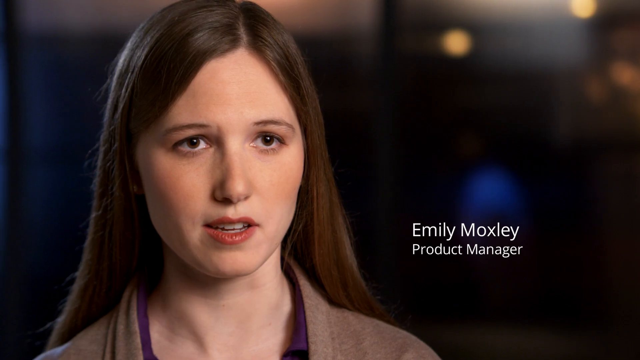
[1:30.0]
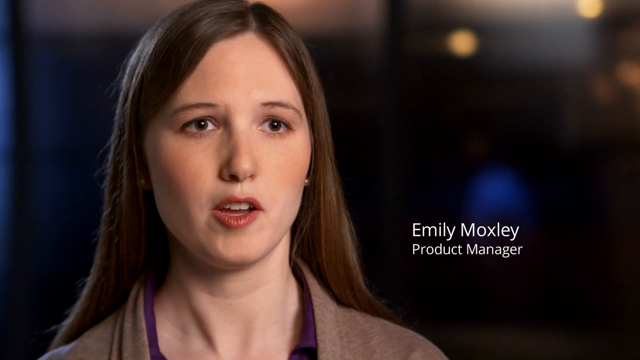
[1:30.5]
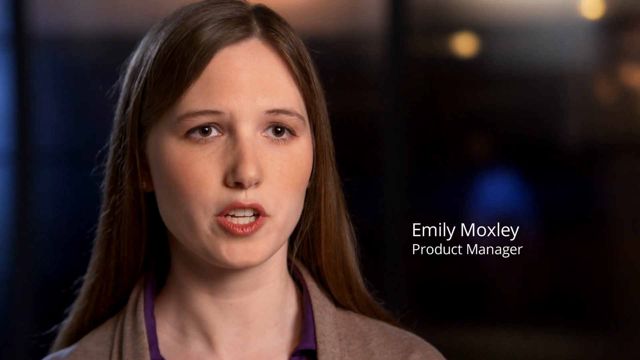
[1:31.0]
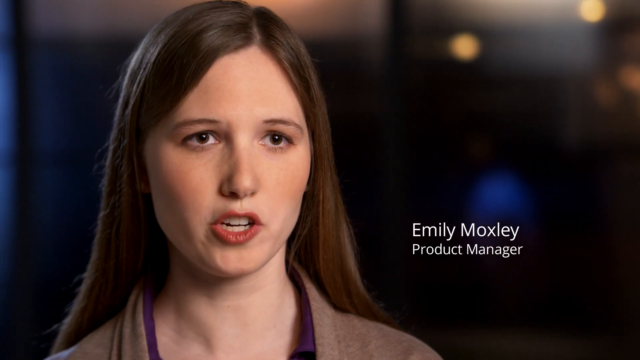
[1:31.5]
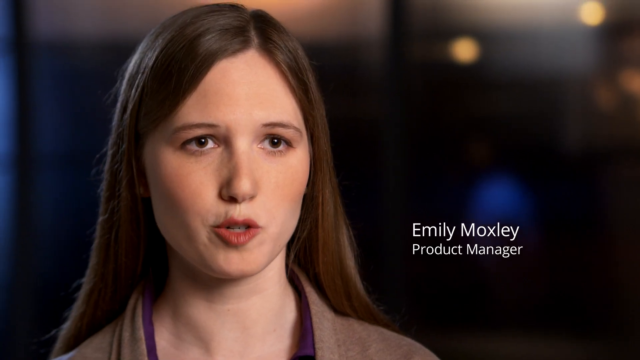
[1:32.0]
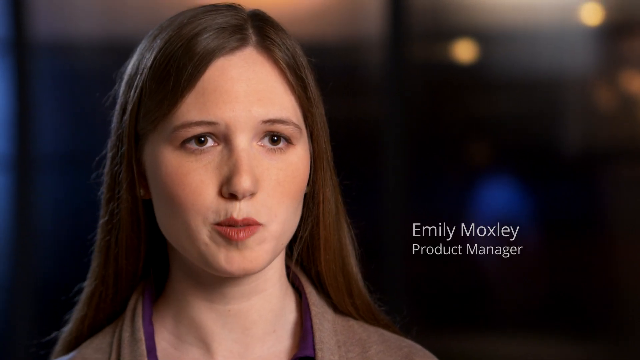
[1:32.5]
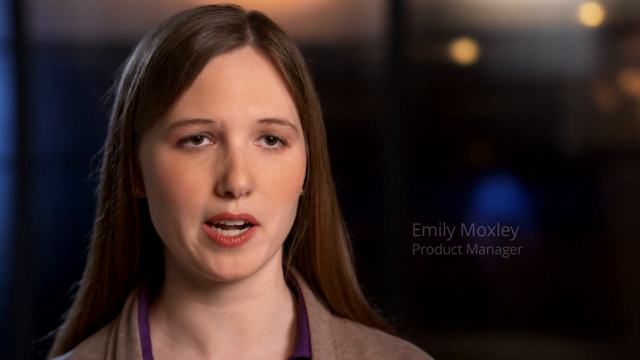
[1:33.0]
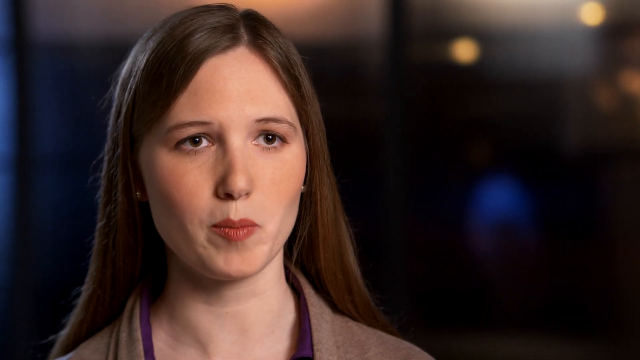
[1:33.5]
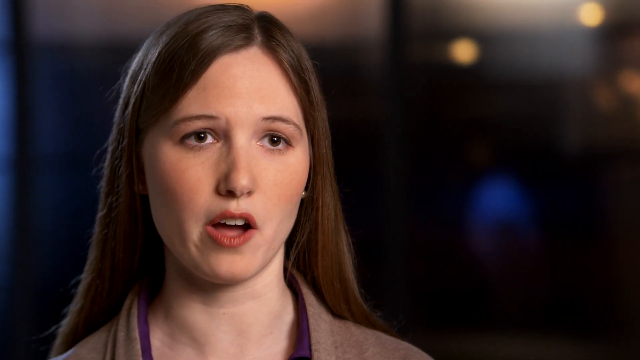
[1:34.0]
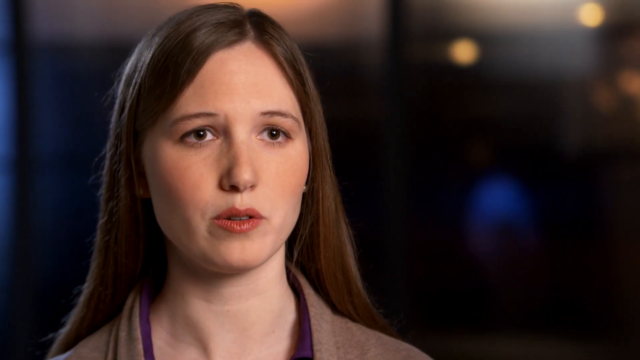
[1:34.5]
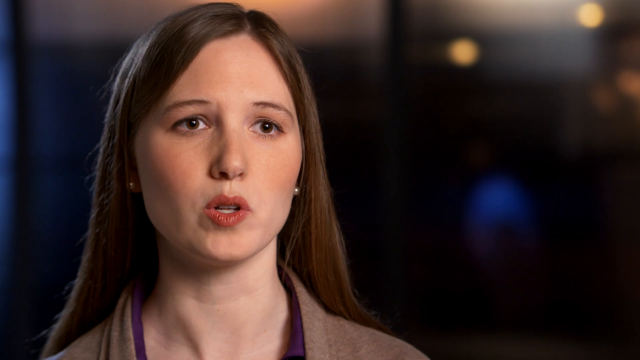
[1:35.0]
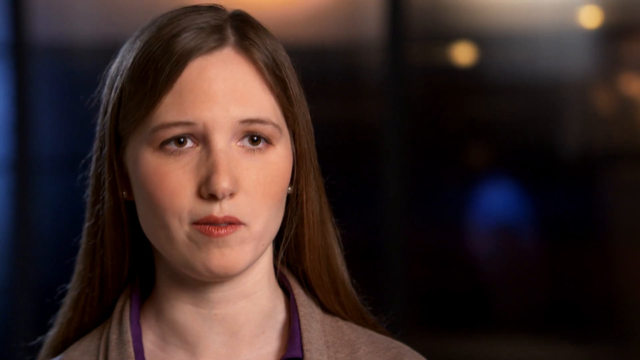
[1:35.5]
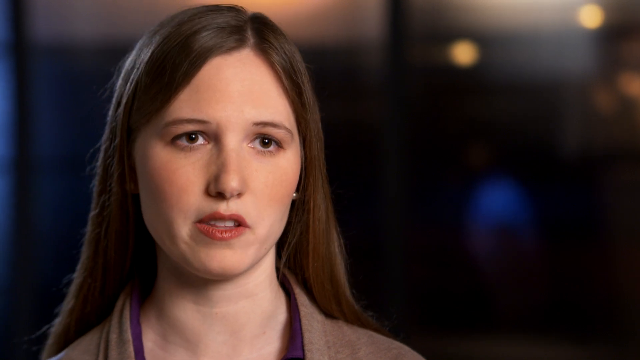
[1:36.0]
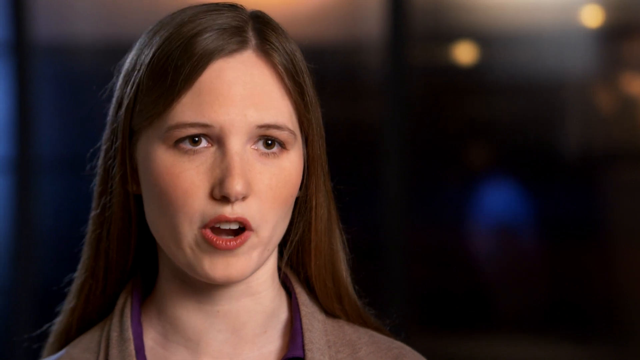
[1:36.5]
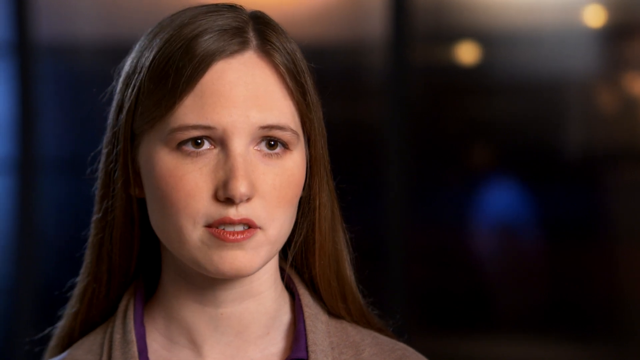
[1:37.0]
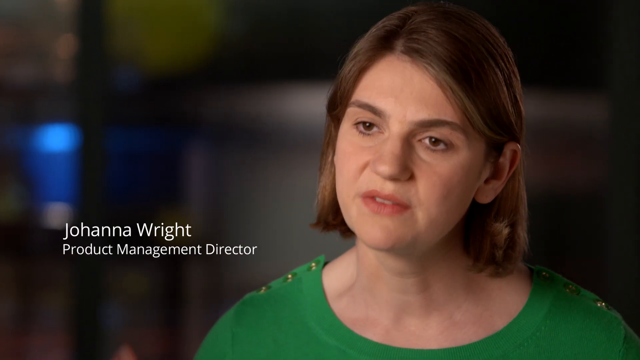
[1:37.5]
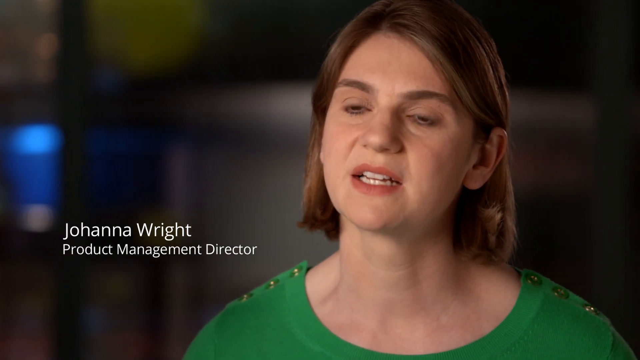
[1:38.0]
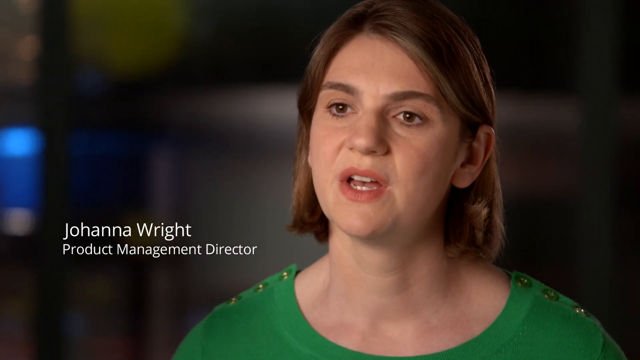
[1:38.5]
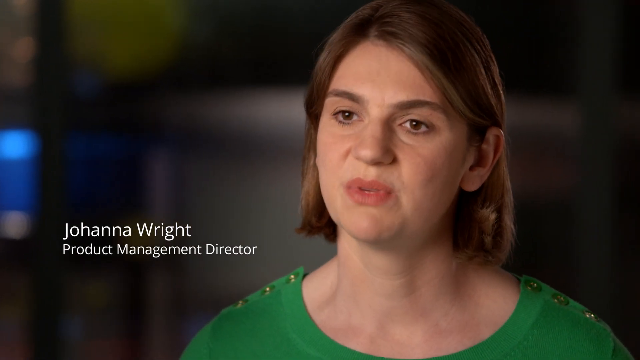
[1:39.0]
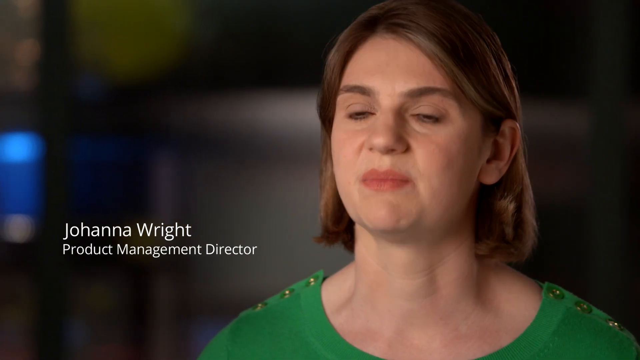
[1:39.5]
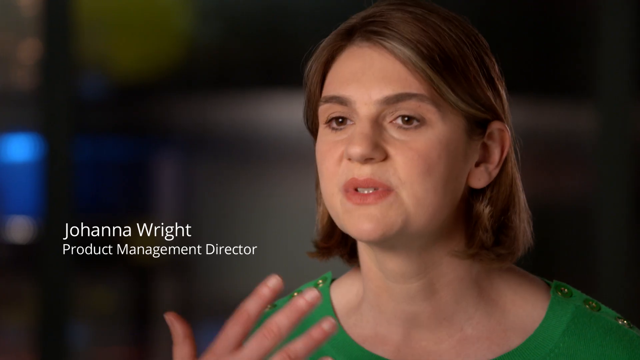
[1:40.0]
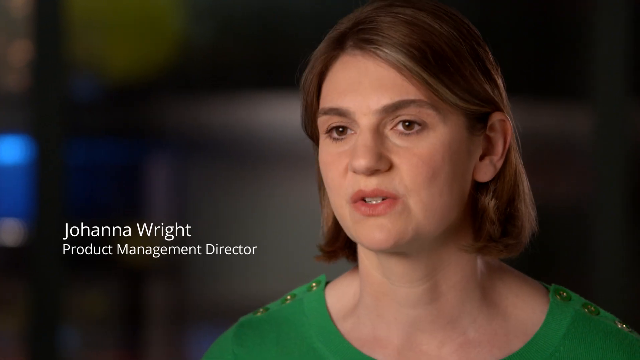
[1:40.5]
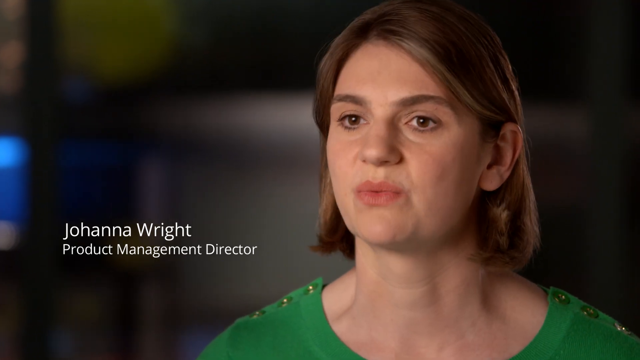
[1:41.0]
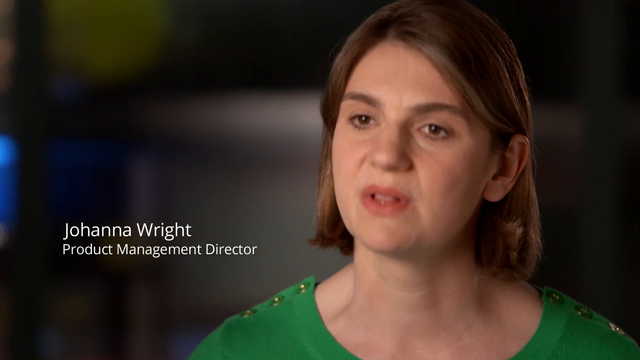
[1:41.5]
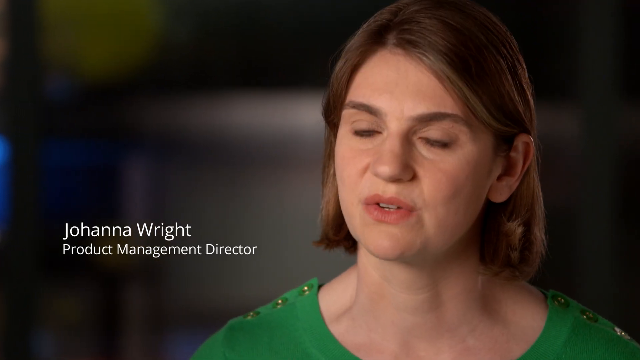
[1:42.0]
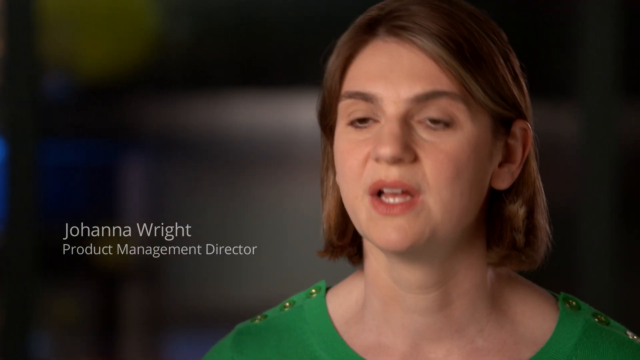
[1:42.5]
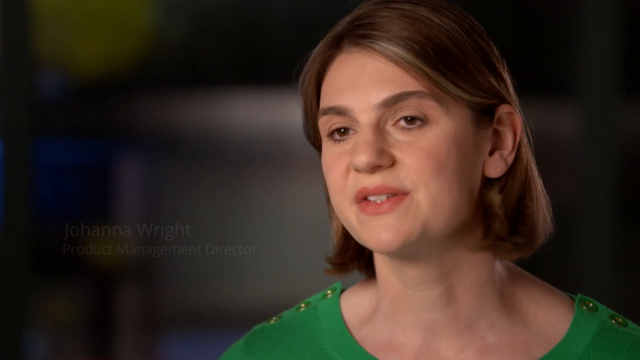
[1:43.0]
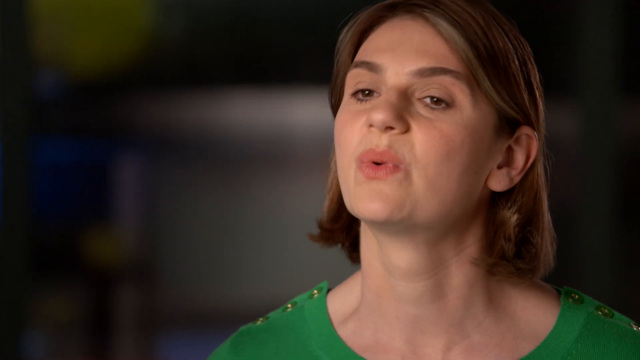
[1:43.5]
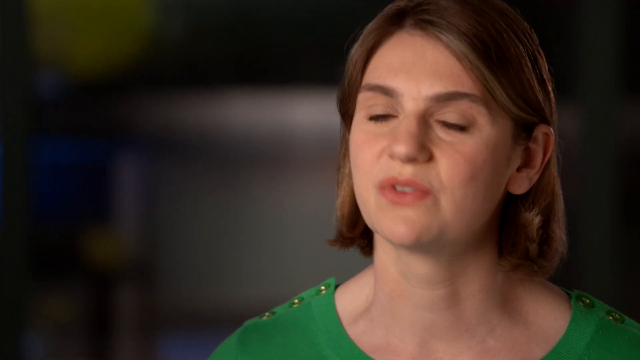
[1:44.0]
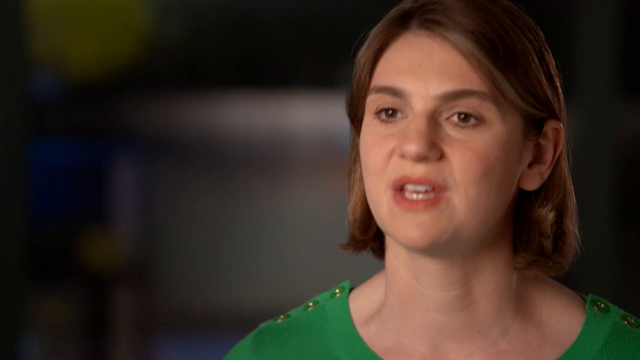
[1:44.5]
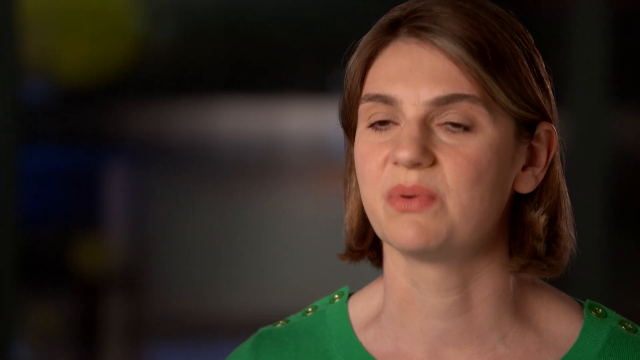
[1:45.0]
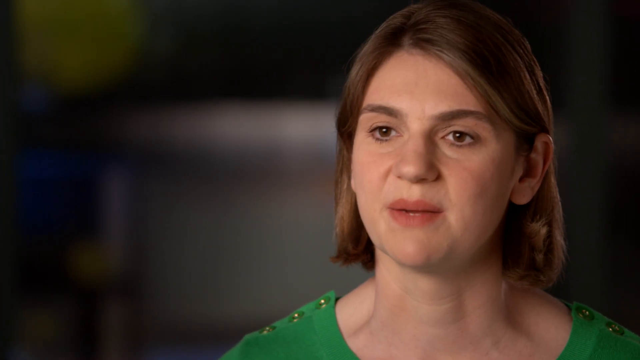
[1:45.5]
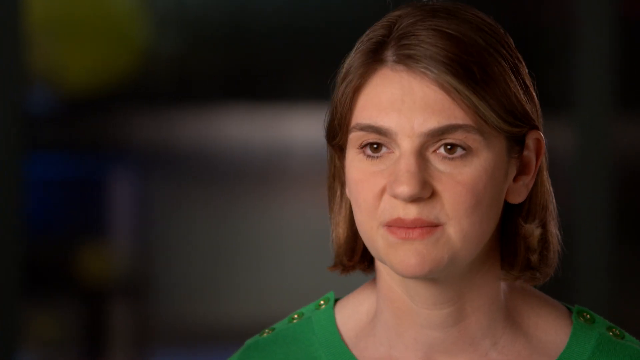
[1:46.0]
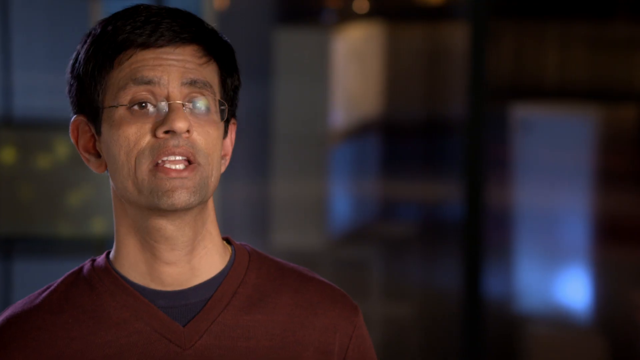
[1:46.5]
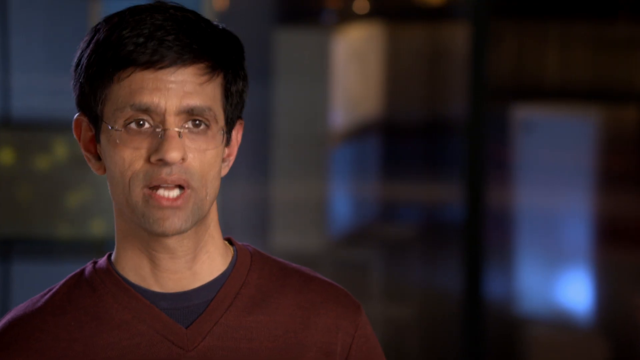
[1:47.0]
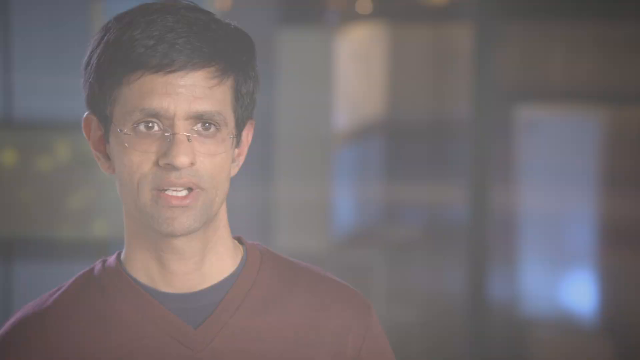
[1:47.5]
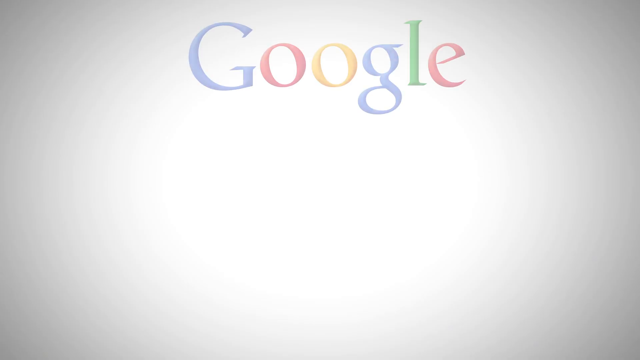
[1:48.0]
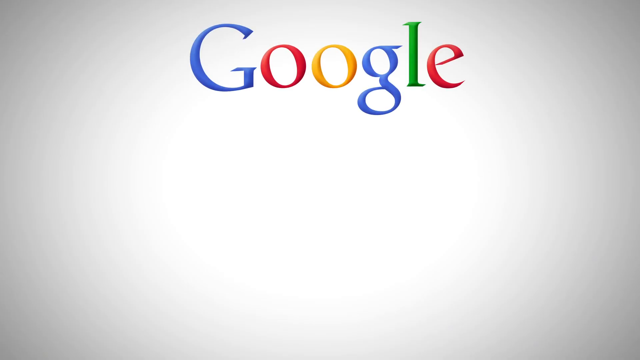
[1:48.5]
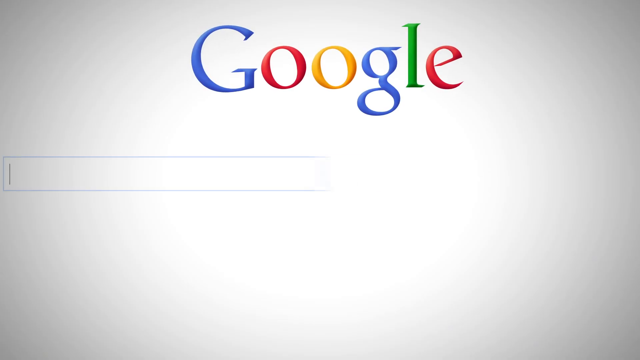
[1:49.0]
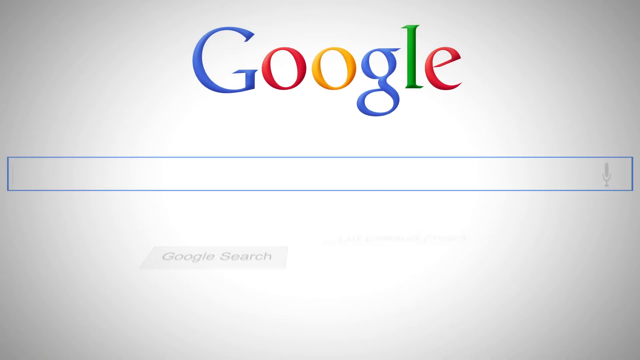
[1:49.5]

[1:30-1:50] A woman with long brown hair falling below her shoulders and brown eyes talks to the camera. The shot switches to another woman with shorter brown hair ending just above her shoulders, positioned on the right side of the screen, with the text "Joanna Wright, Product Management Director". She wears some kind of green top and talks to the camera against a dark, blurred background. A man briefly talks to the camera before the video moves to a Google search screen: on a white background, the Google logo appears above an empty search box. The "Google Search" and "I'm Feeling Lucky" buttons, with grey backgrounds and black text, then appear below the search box, as the page fills in one element at a time.